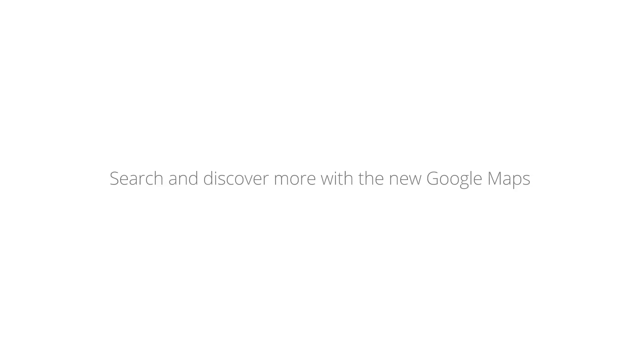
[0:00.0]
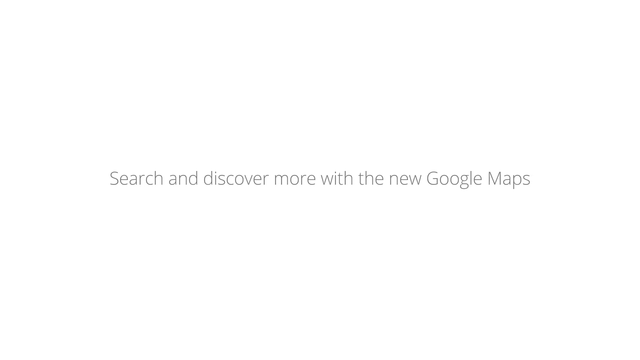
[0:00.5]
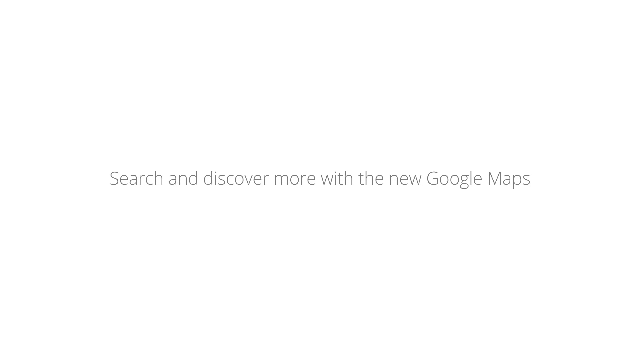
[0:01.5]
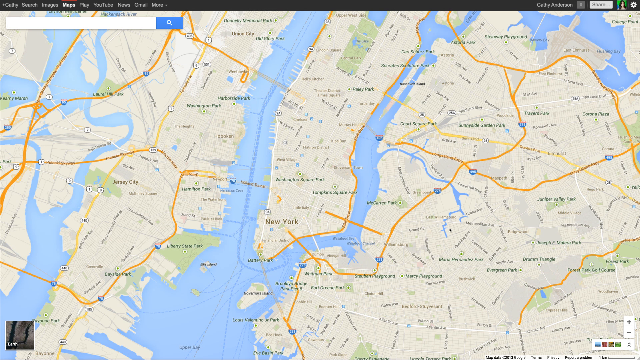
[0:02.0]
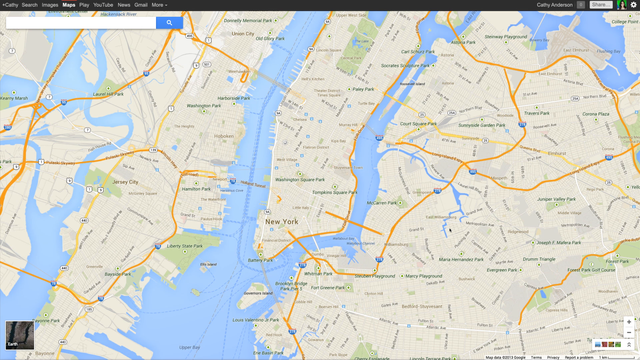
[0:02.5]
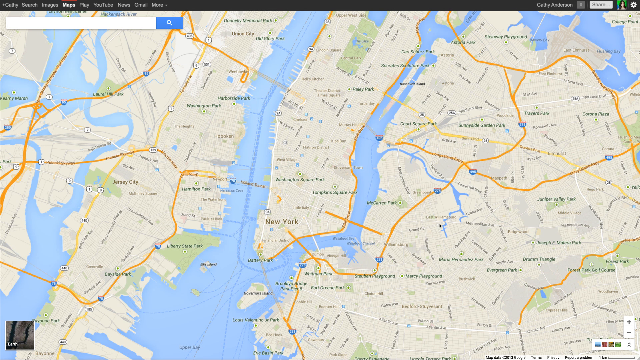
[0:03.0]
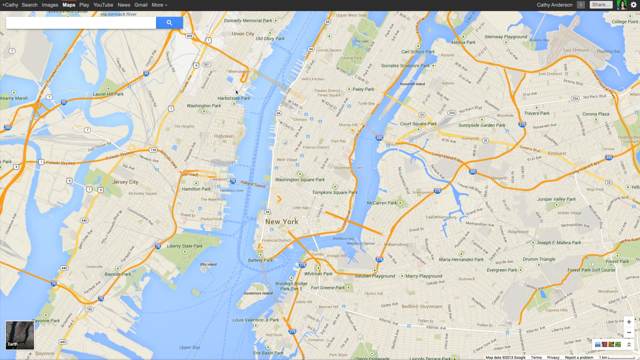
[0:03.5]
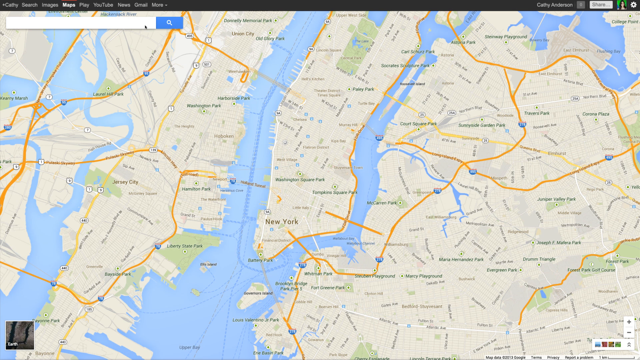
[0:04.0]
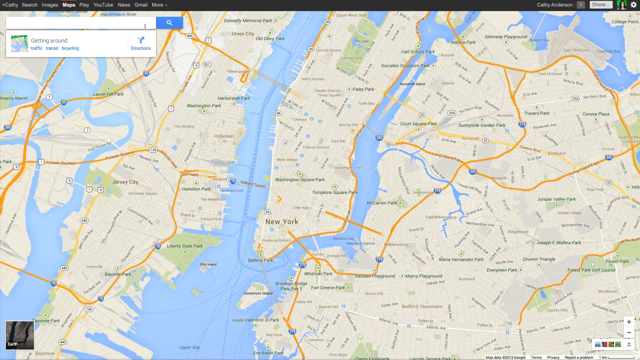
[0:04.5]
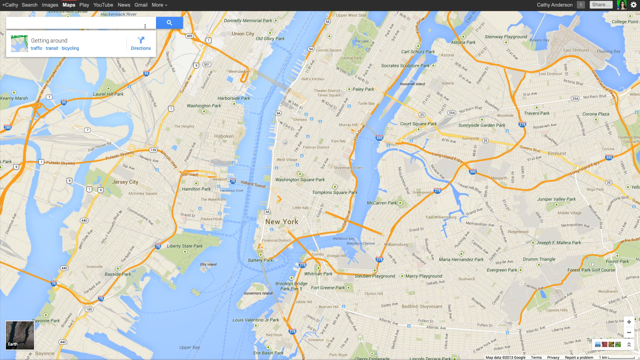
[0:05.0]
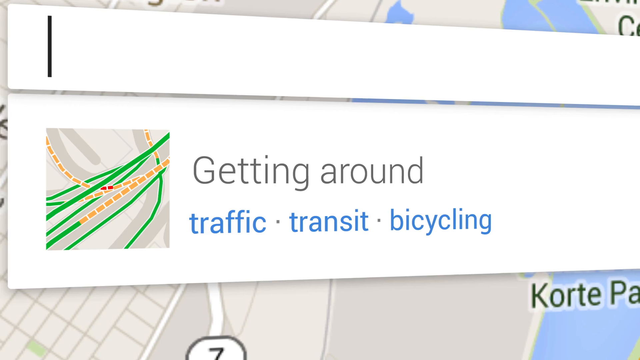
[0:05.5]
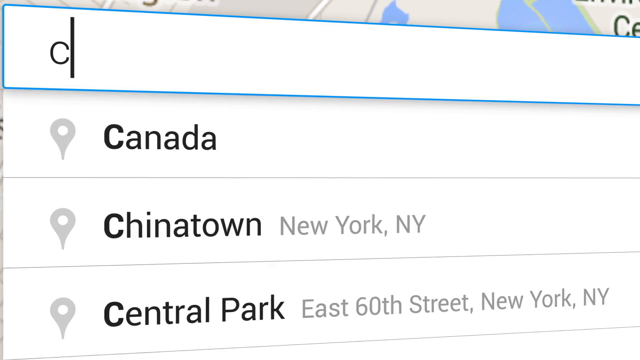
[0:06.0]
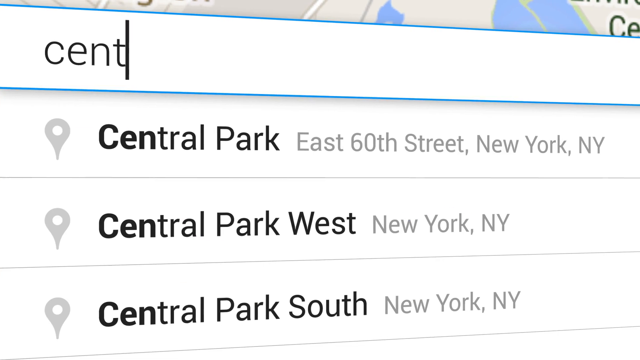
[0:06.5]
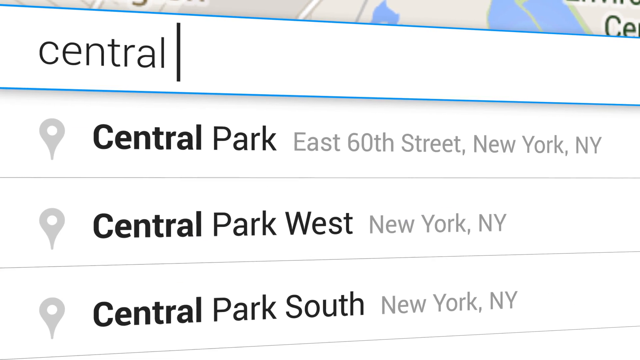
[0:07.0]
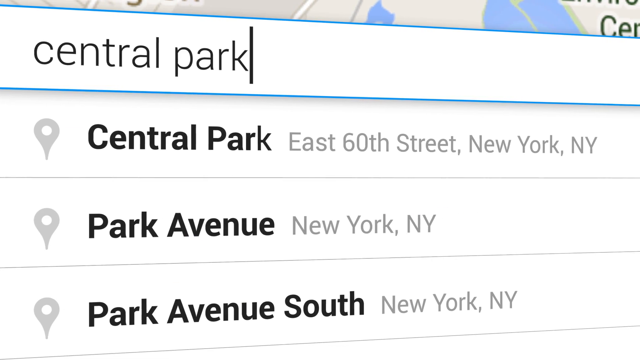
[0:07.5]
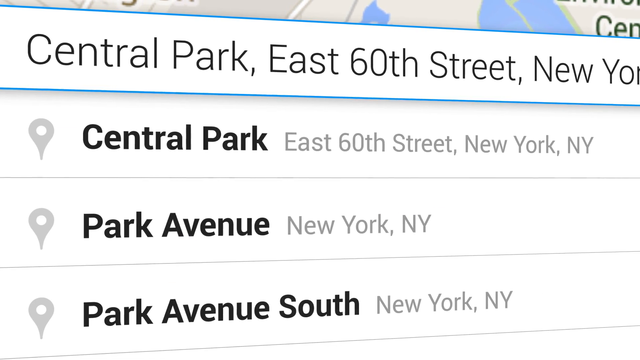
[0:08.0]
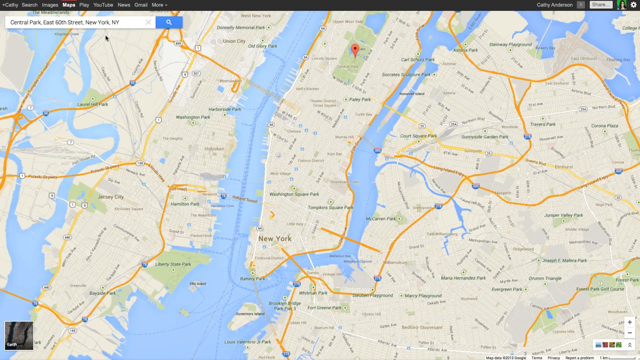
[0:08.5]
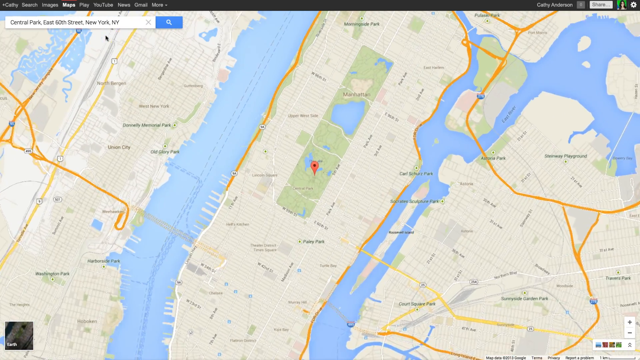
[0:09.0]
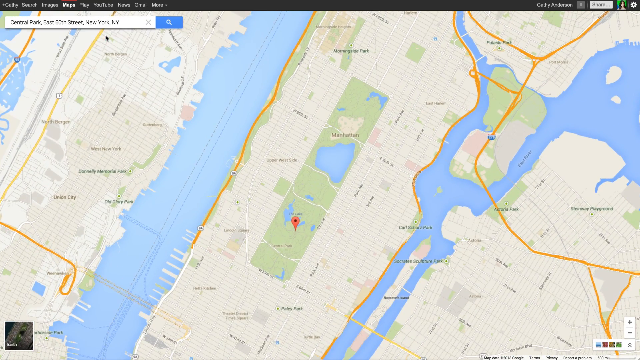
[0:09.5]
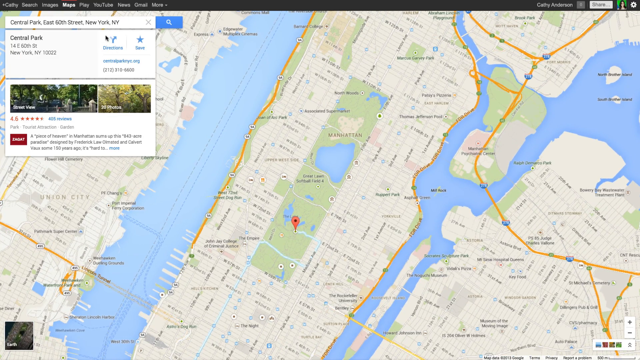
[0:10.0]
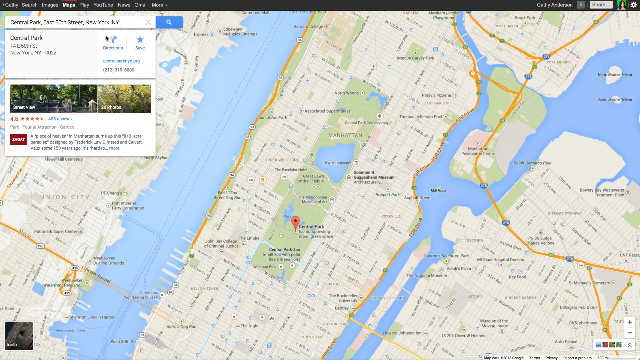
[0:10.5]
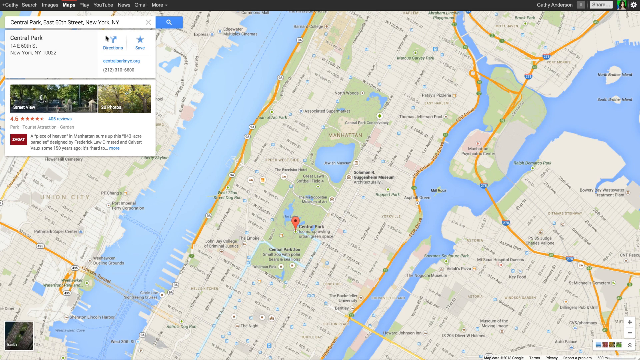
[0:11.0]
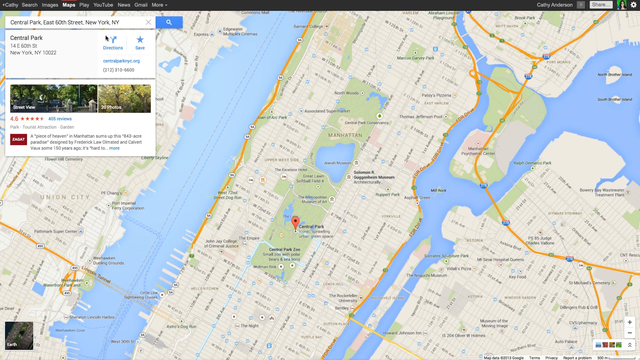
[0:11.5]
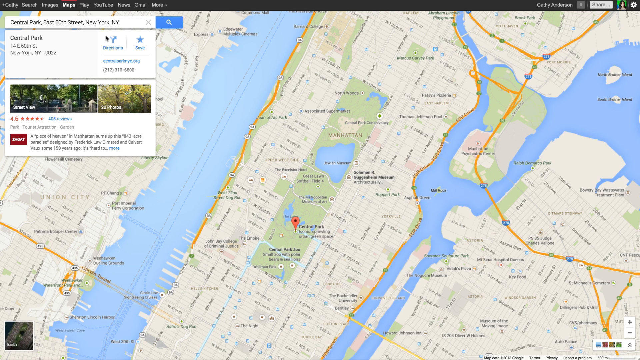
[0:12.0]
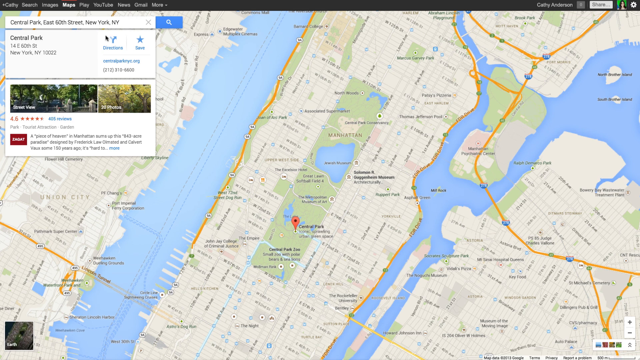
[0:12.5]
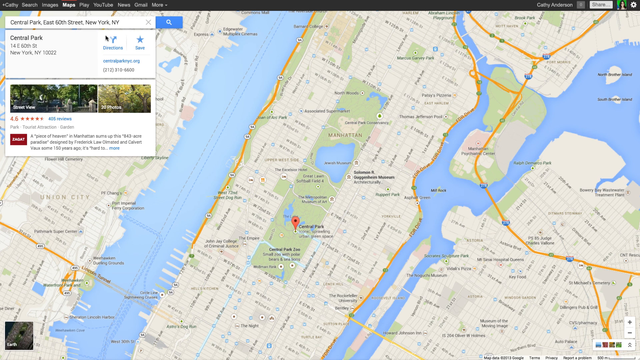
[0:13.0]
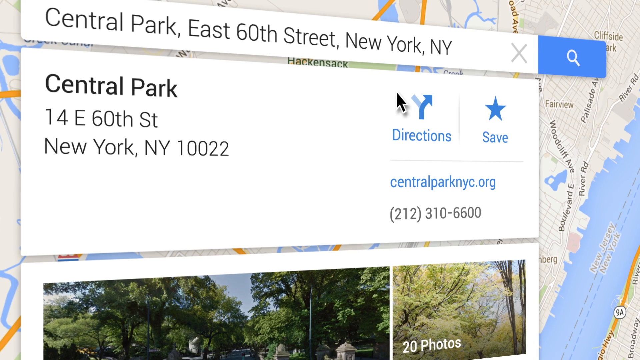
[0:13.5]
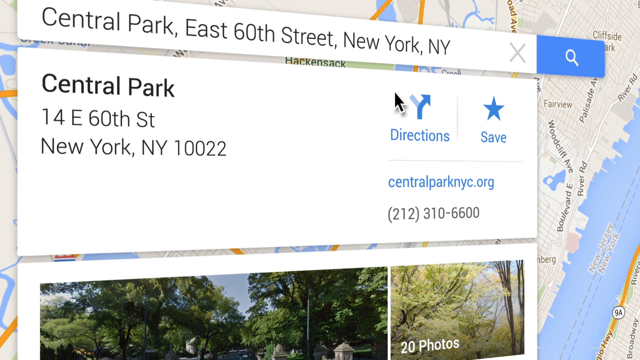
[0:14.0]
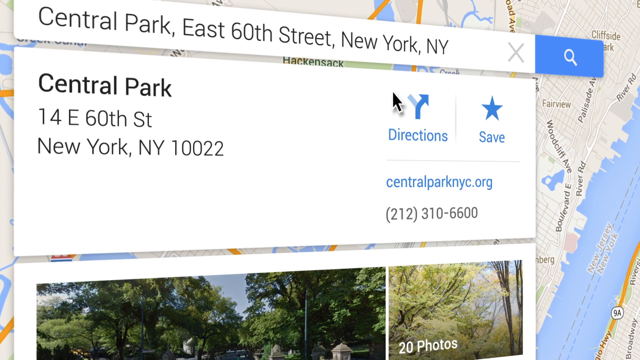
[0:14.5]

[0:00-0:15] A map appears, and someone types "Central Park" into the search, then "Central Park, East 60th Street." The address comes up, and the map zooms in to where Central Park is, with something like a red peg marking its location. The text "search and discover more with Google" then appears.